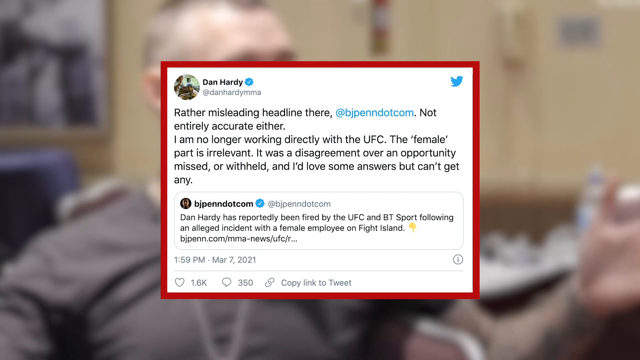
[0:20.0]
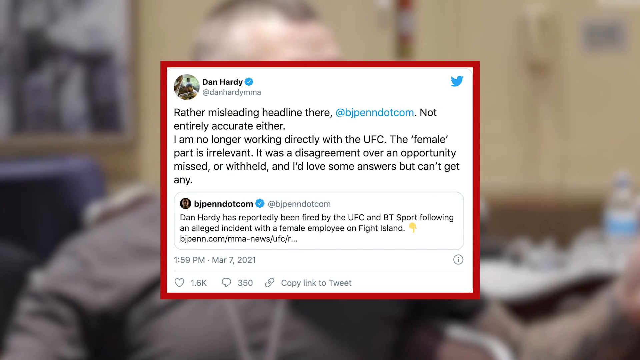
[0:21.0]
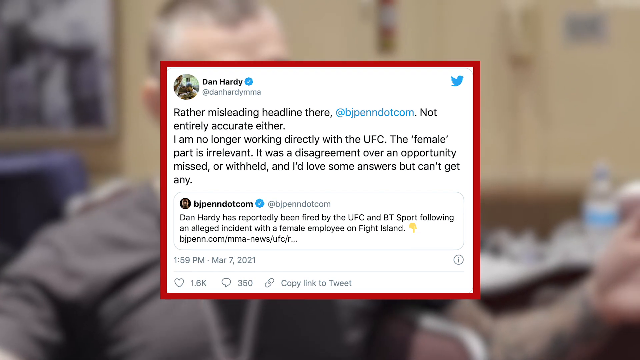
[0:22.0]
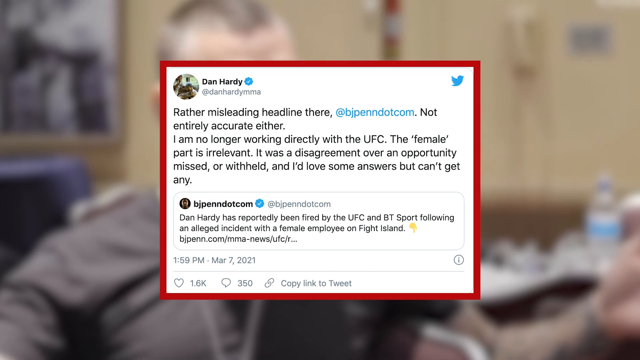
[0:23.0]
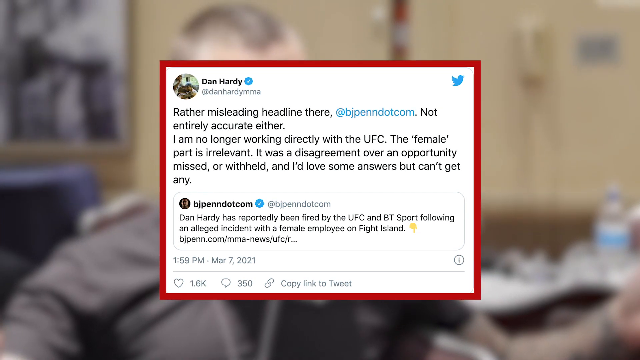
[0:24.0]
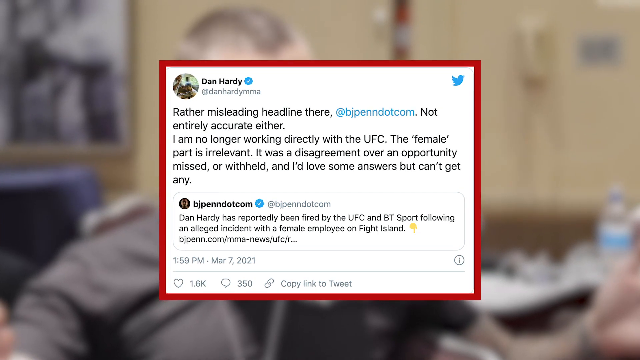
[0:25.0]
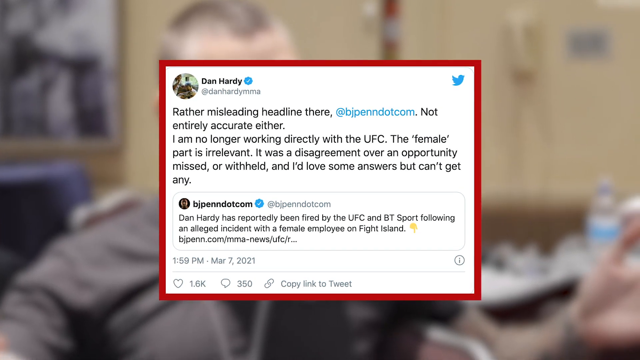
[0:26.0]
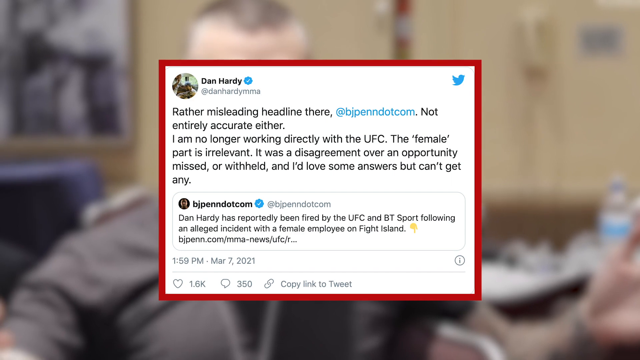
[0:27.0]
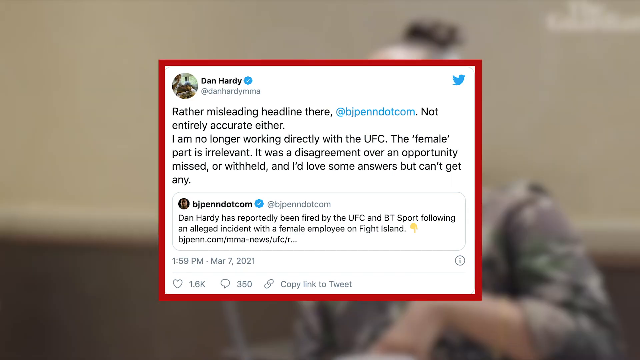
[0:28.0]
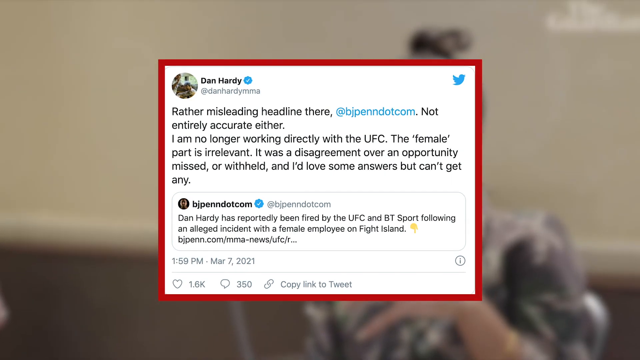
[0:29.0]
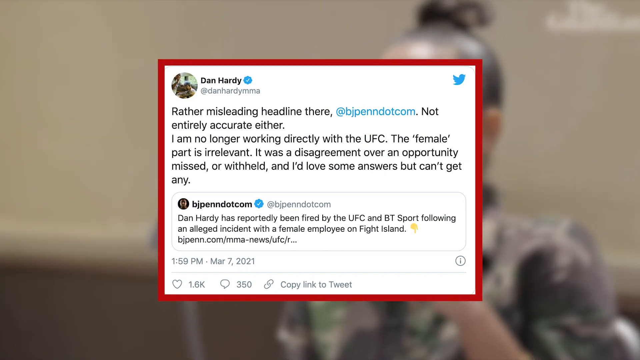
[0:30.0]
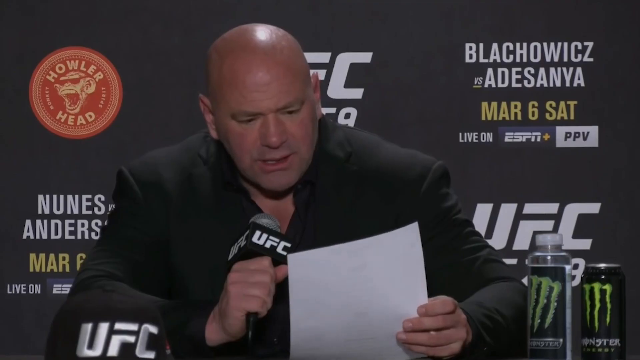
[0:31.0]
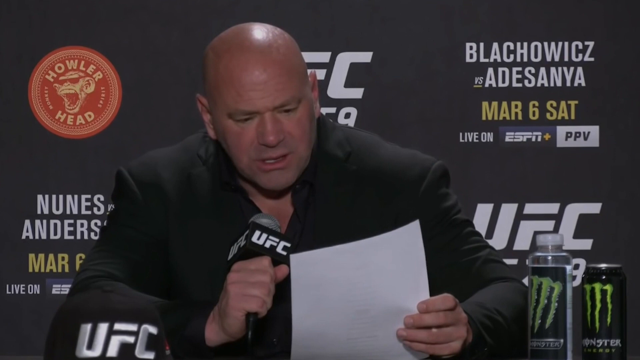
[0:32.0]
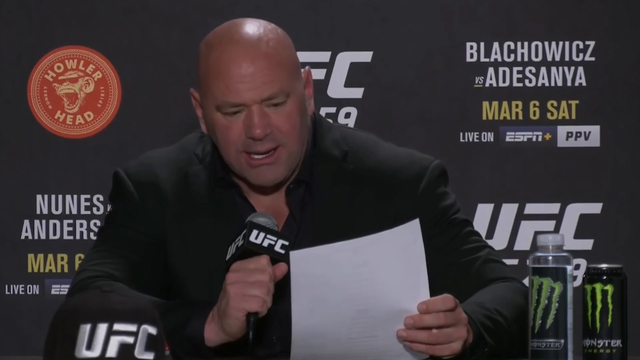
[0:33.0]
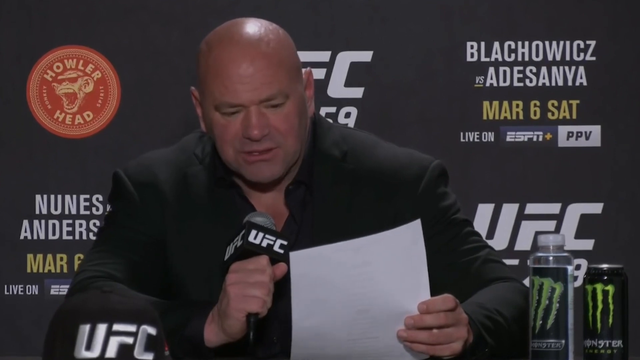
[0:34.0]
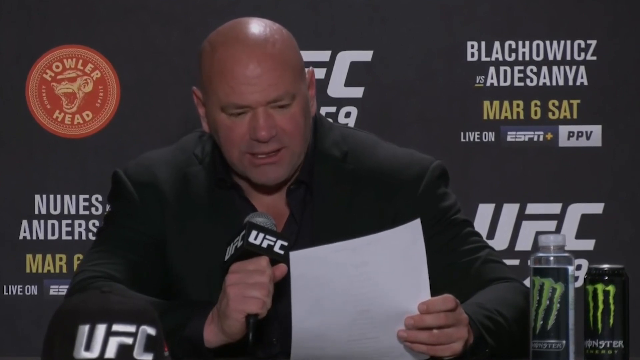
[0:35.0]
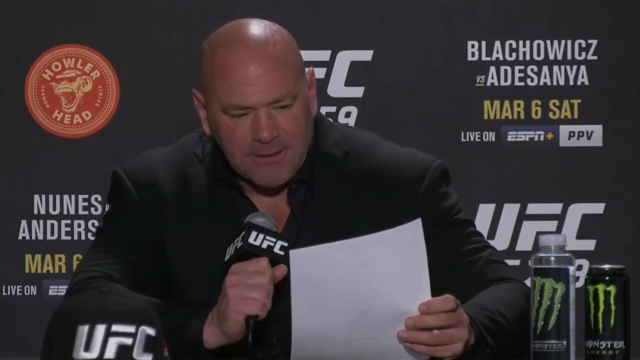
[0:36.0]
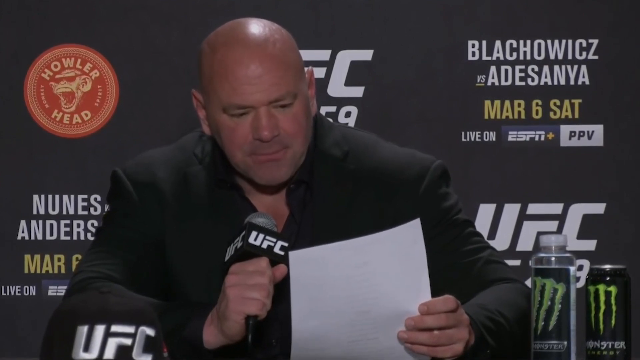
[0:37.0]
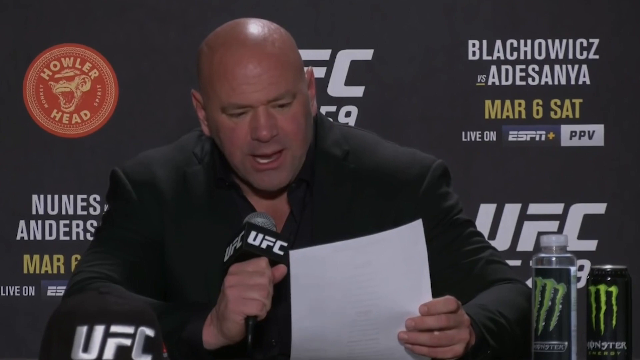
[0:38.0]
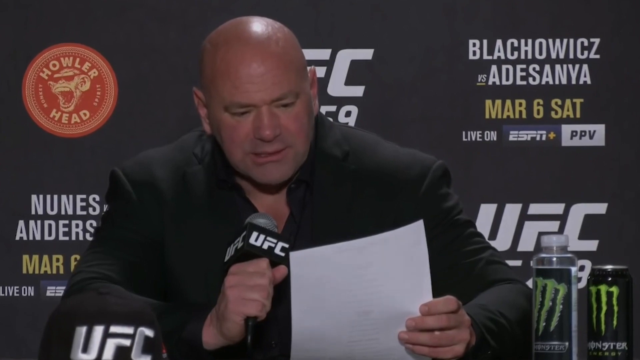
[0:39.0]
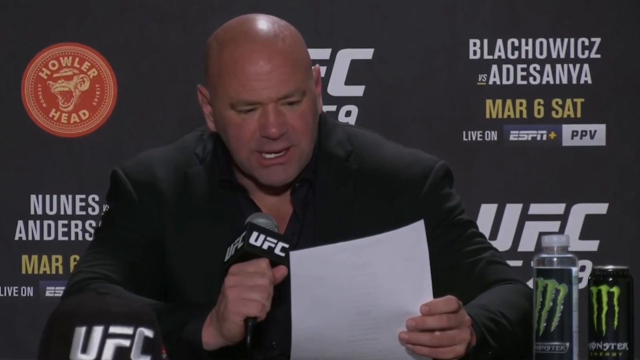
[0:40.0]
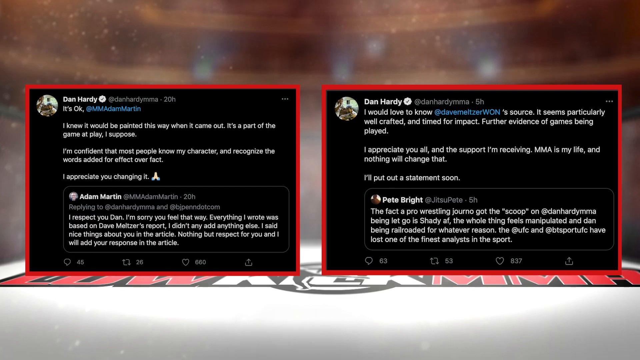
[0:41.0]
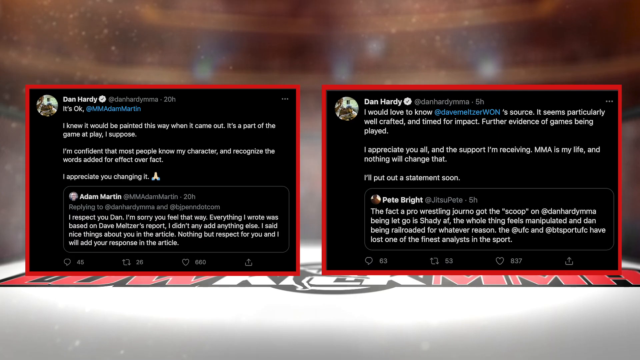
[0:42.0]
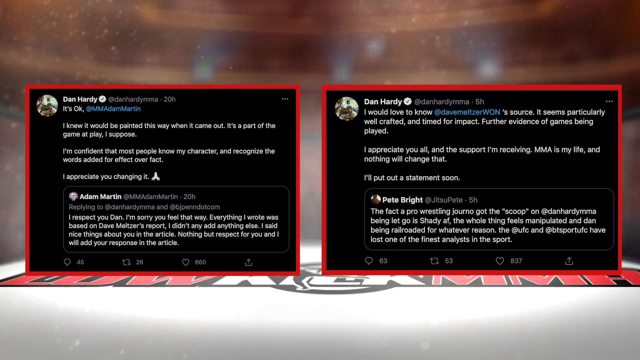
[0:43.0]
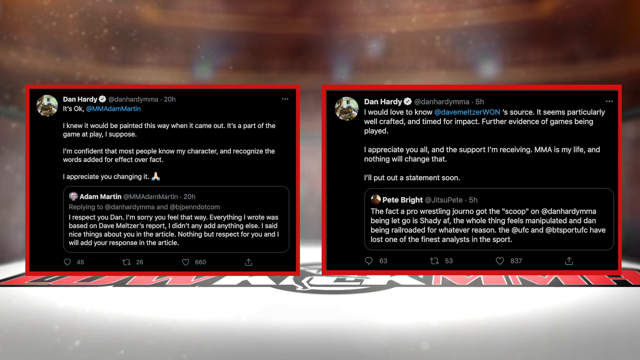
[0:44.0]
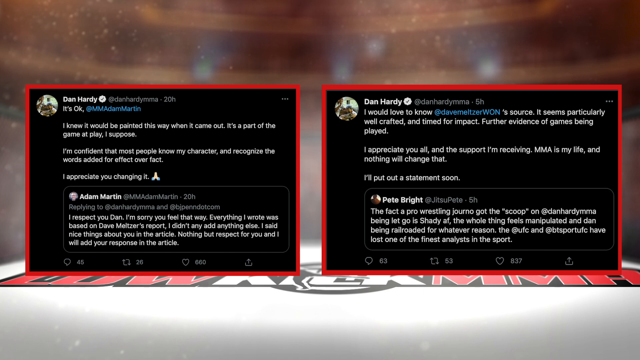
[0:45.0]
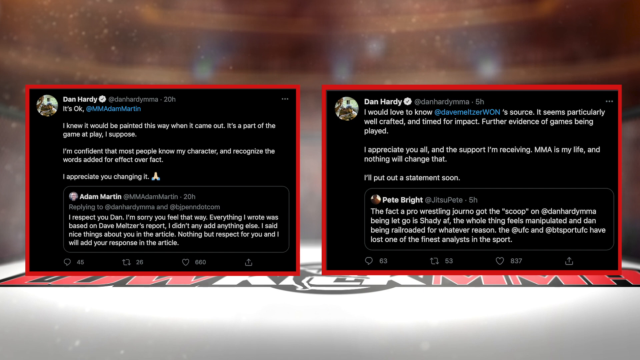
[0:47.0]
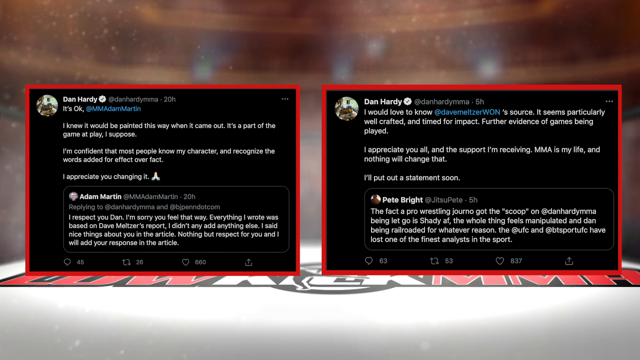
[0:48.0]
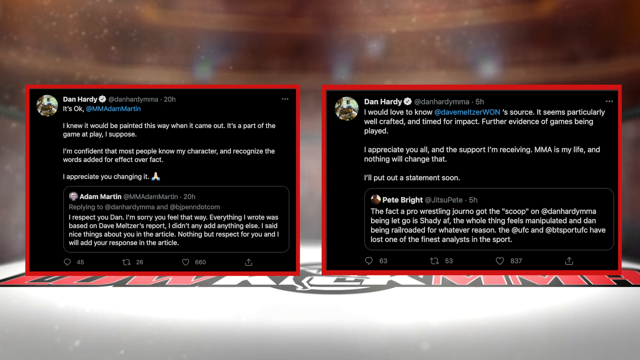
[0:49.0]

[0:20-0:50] A quote tweet from Twitter is shown on screen, with a response posted above an original tweet. The original tweet is by BJPin.com and says "Dan Hardy has reportedly been fired by the UFC and BT Sport following an alleged incident with a female employee on Fight Island." Dan Hardy's quote-tweet response says "Rather misleading headline there, BJPin.com, not entirely accurate either. I'm no longer working directly with the UFC. Female part is irrelevant. It was a disagreement over an opportunity missed or withheld, and I'd love some answers, but can't get any." The video then cuts to a bald man holding a UFC microphone. He sits in front of a black wall bearing the UFC logo and a logo for Howlerhead. He holds a white sheet of paper and reads from it. A can of Monster Energy drink sits on the desk beside him. Two tweets by Dan Hardy are then shown on screen. The first says "It's okay, Adam Martin. I knew I would be painted this way when it came out. It's part of the game I play, I suppose. I'm confident that most people know my character and recognize the words added for effect over fact. I appreciate you changing it." The second says "I would love to know your source. It seems particularly well crafted and timed for impact. Further evidence of games being played. I appreciate you all and the support I'm receiving. MMA is my life and nothing will change that. I'll put out a statement soon."